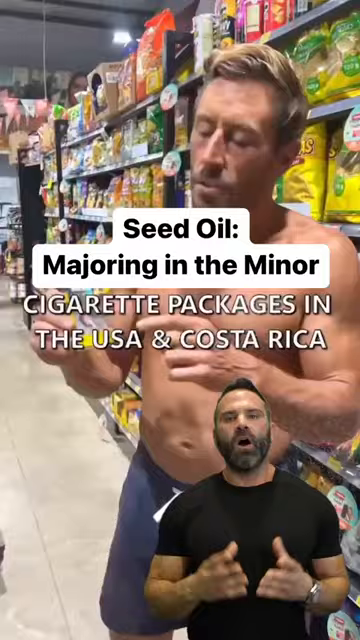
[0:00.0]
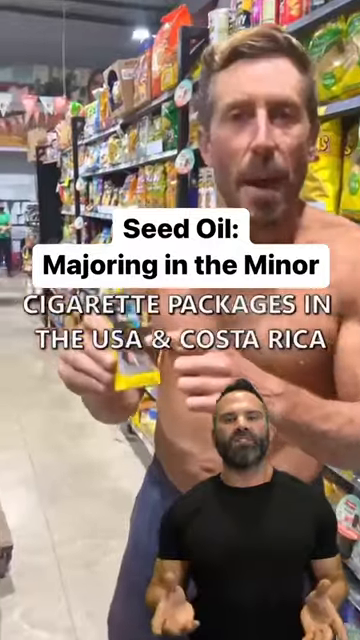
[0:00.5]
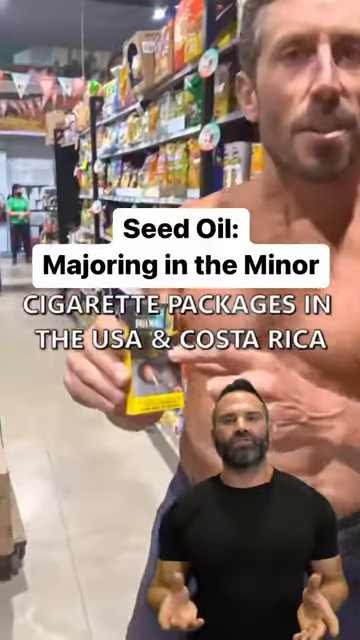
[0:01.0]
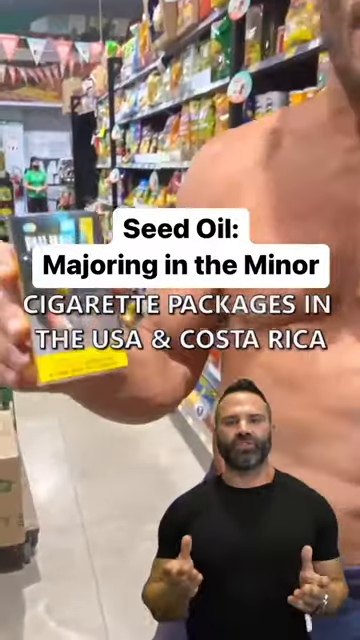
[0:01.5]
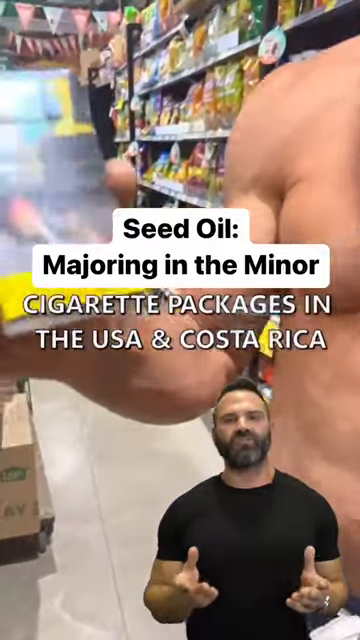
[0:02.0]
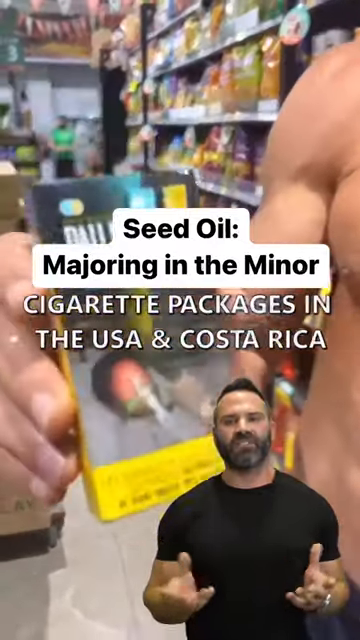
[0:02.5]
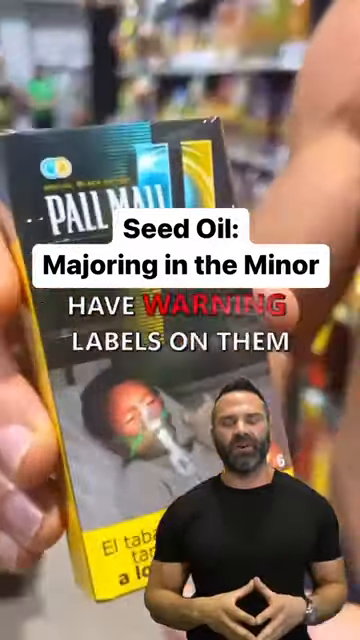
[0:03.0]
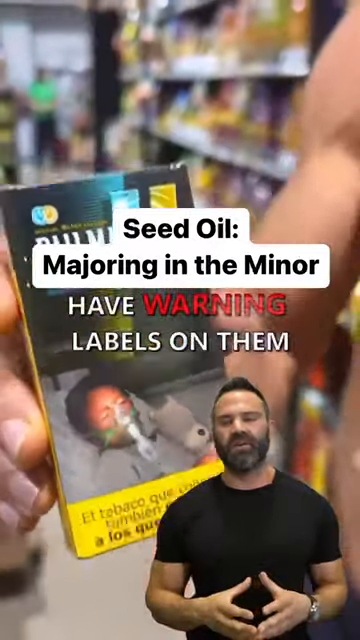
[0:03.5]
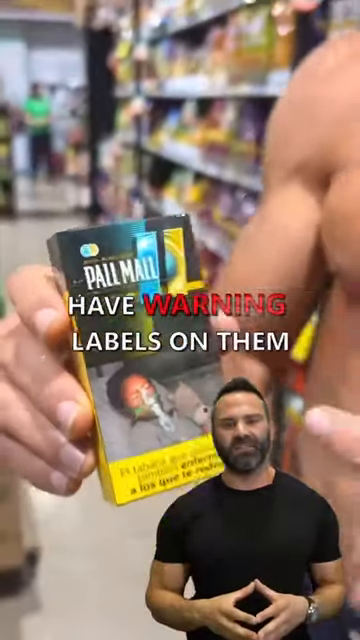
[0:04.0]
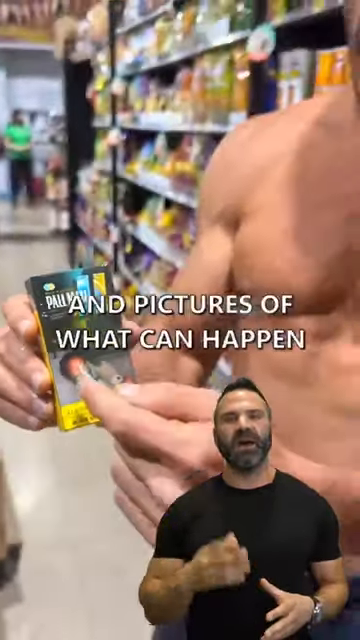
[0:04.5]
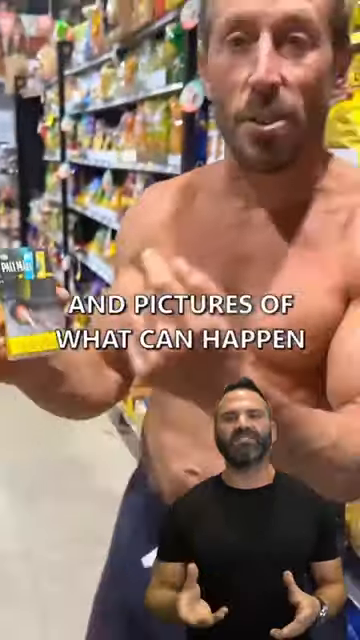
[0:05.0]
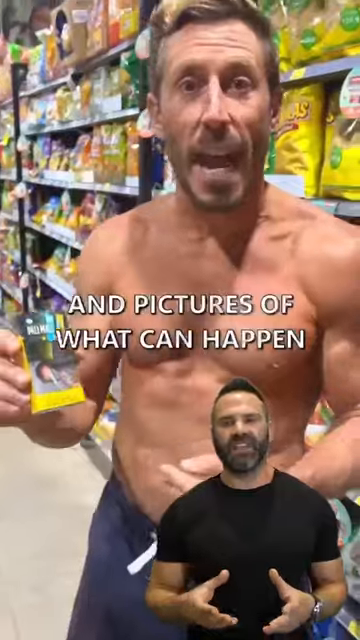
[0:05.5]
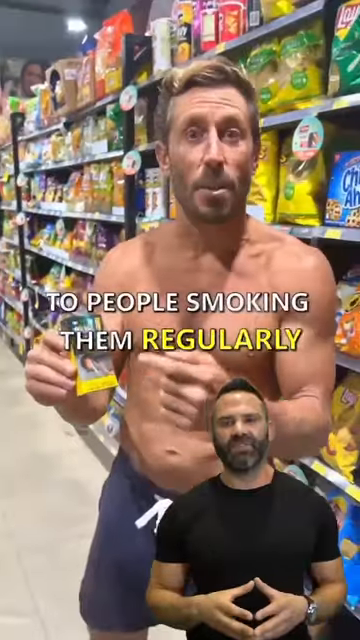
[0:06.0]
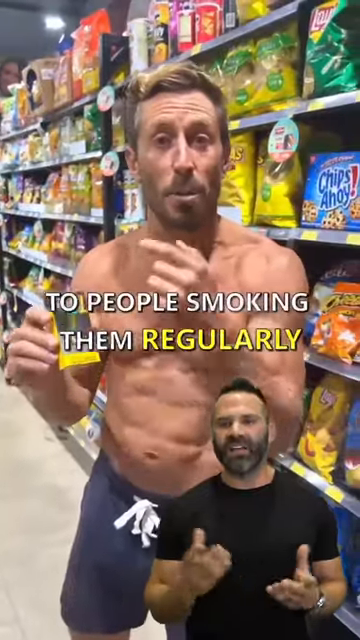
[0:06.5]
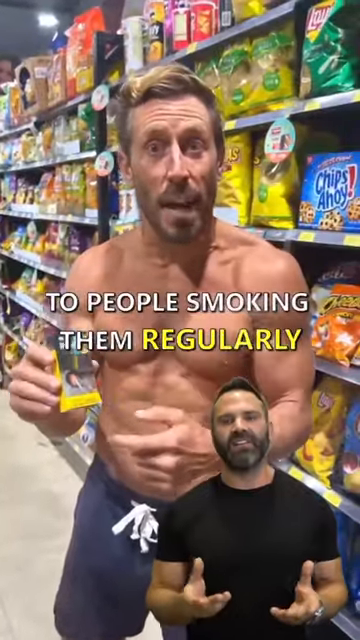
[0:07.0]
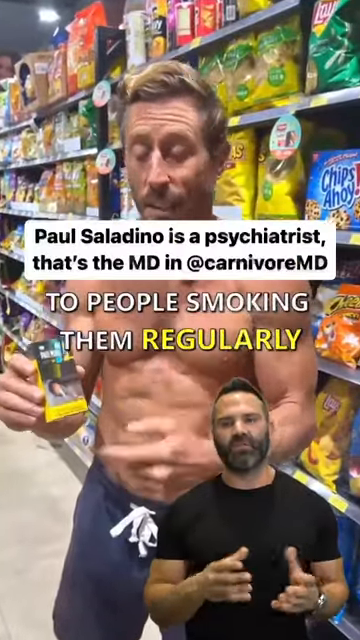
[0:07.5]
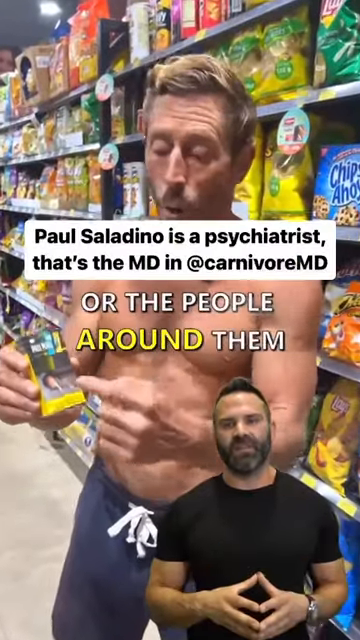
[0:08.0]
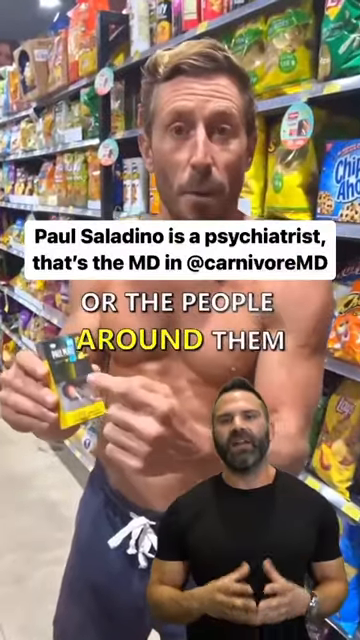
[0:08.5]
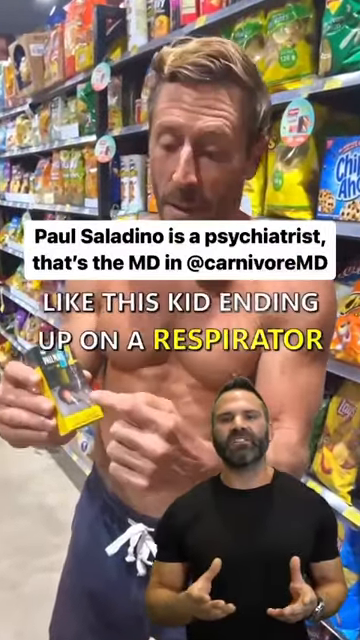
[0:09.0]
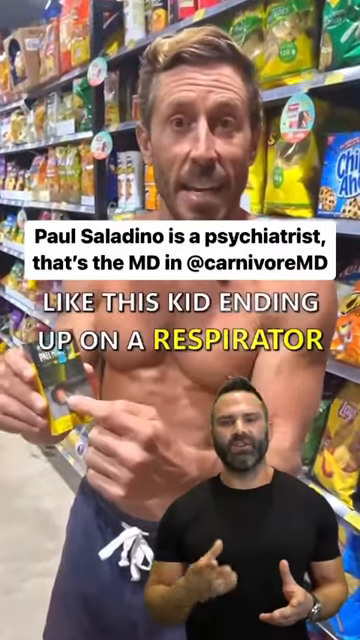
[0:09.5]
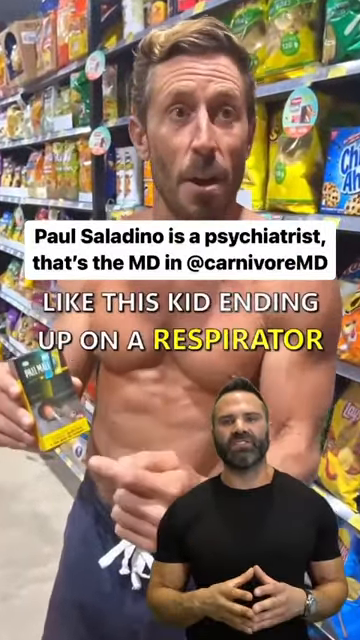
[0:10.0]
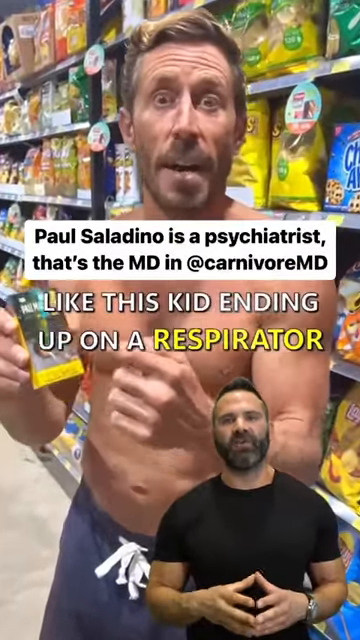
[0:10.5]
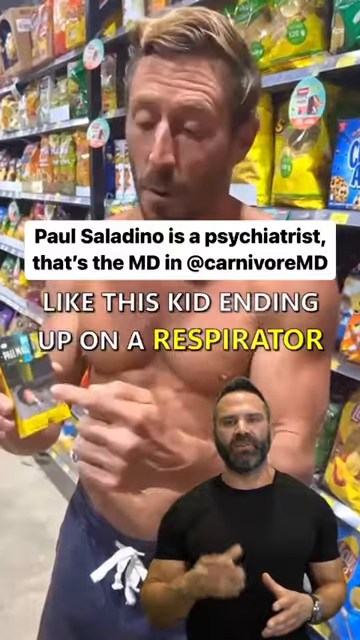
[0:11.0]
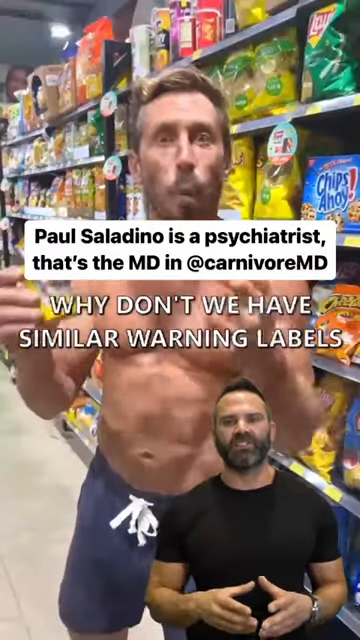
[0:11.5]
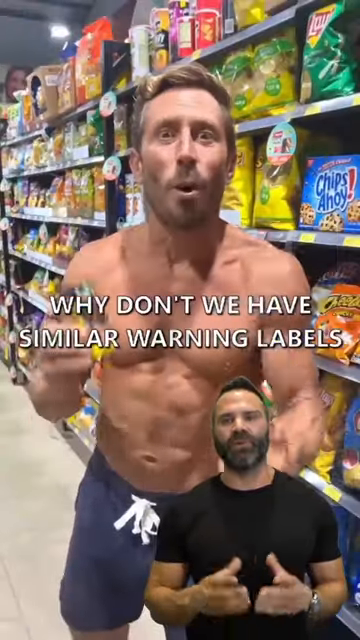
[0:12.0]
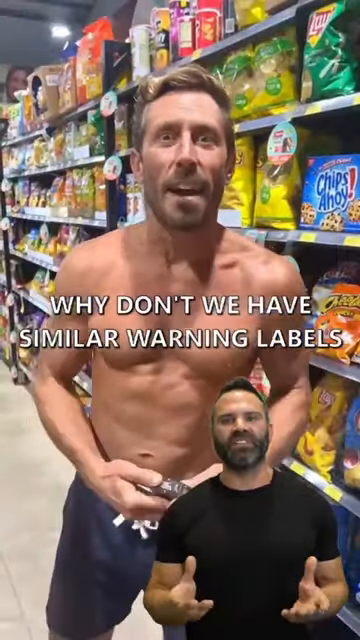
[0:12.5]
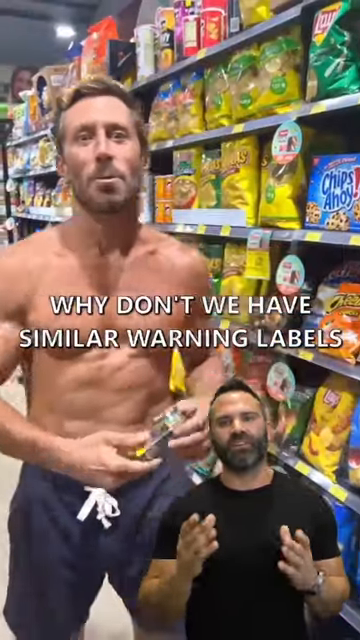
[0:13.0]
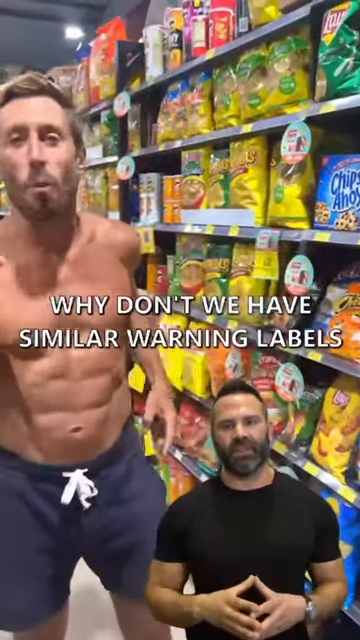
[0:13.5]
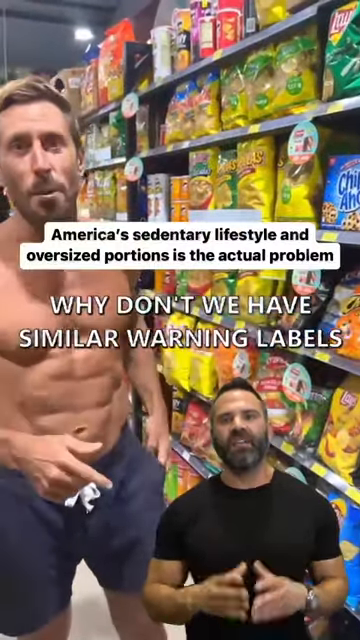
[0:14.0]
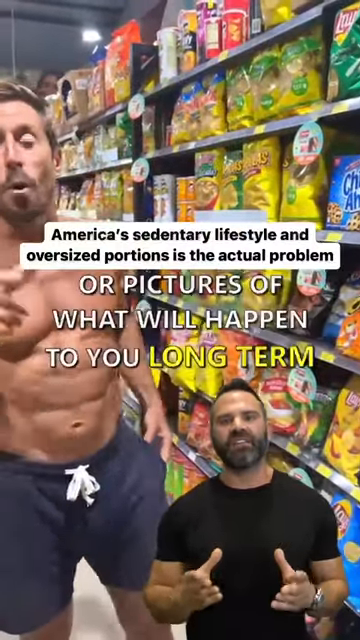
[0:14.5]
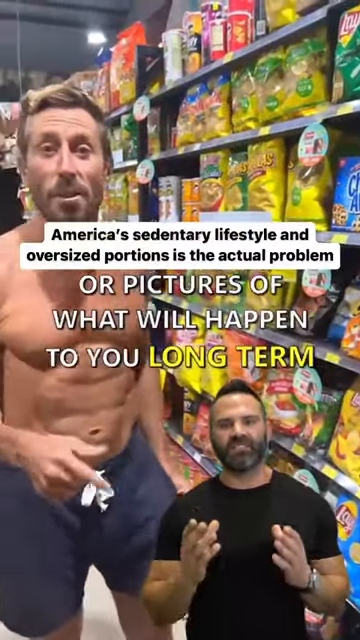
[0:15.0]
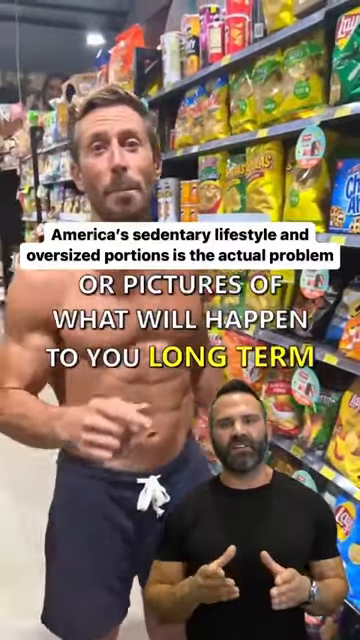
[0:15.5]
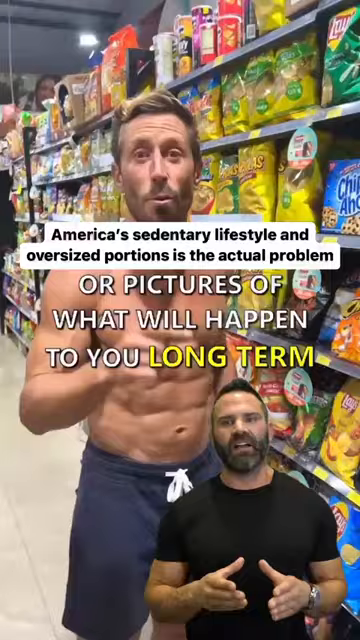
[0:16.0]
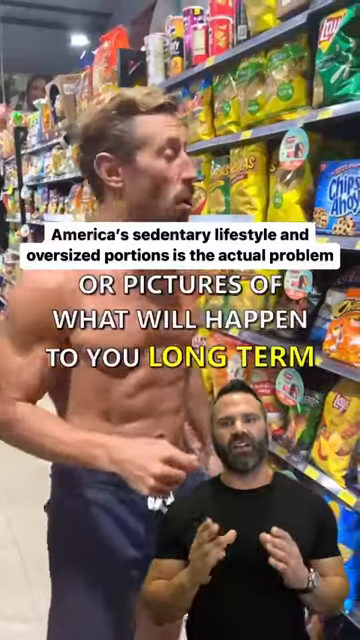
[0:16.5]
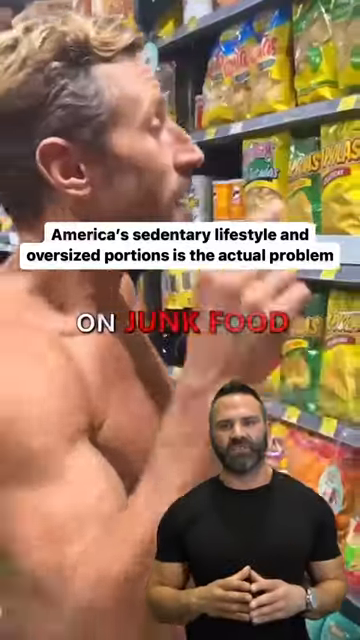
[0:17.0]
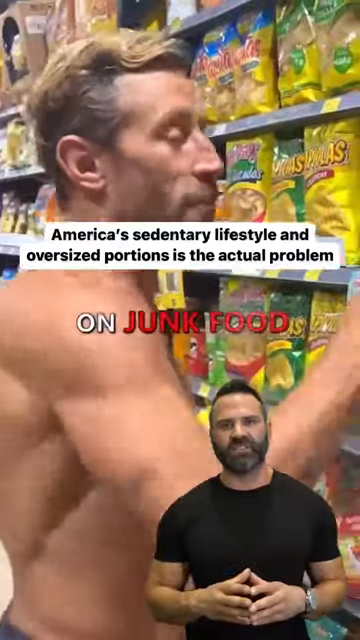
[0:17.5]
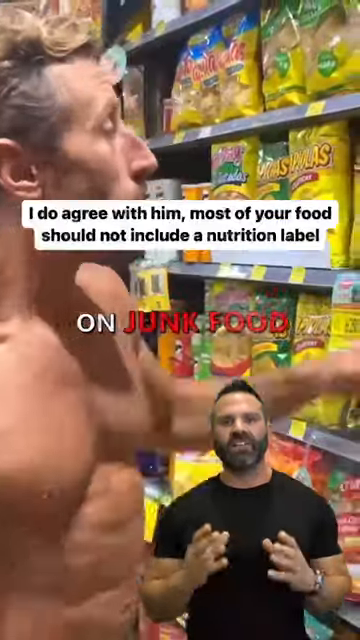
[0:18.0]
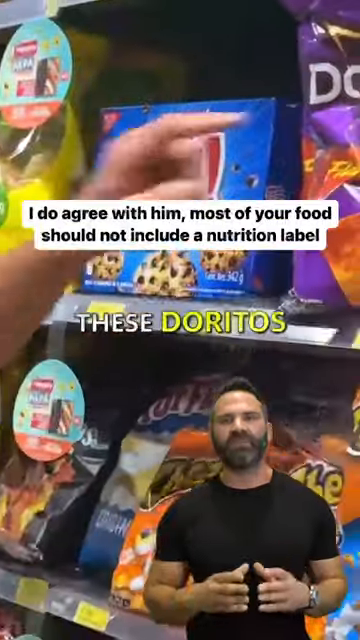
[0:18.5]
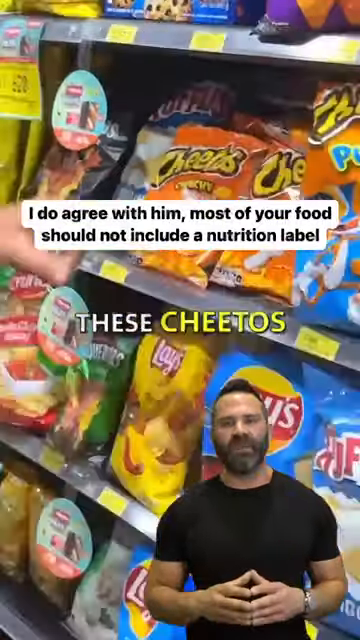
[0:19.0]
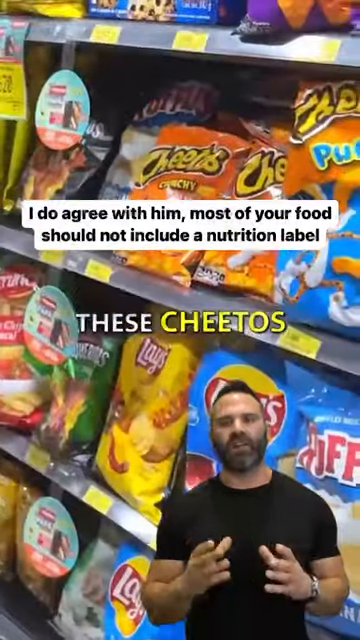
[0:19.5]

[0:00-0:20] The video is styled like a TikTok short reel. A man with dirty blonde hair and a medium build stands in a grocery aisle that appears to be the snack section, with a lot of chips stacked on the shelves. A text overlay reads "seed oil majoring in the minor," followed by "cigarette packages in the United States and Costa Rica." In the bottom right there is a video cutout of a different person wearing a black t-shirt, who is speaking. The man in the aisle shows a Paul Mall cigarette carton to the camera. Text then appears saying "Paul Saladino is a psychiatrist."